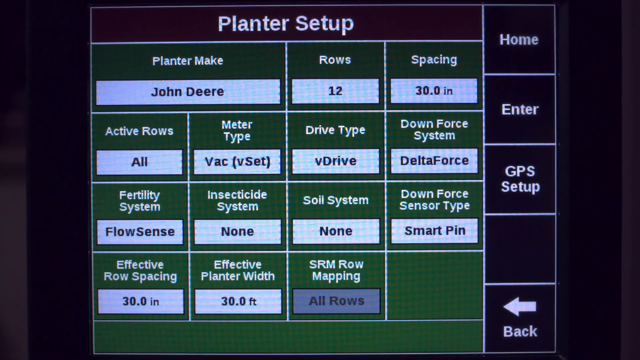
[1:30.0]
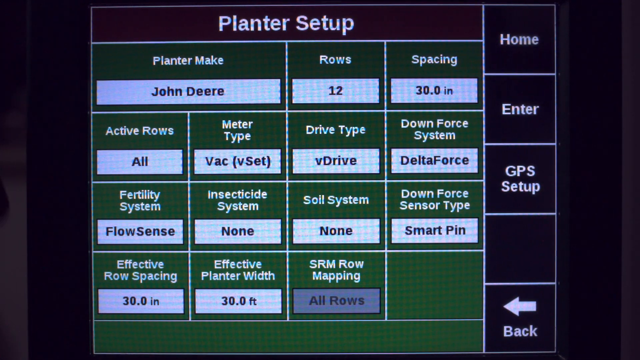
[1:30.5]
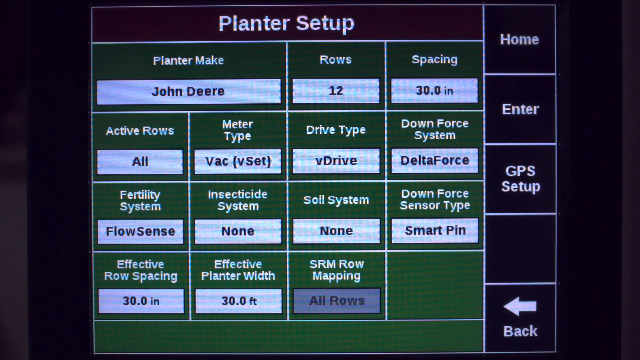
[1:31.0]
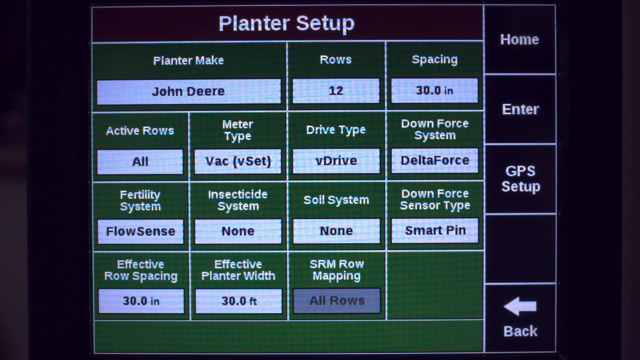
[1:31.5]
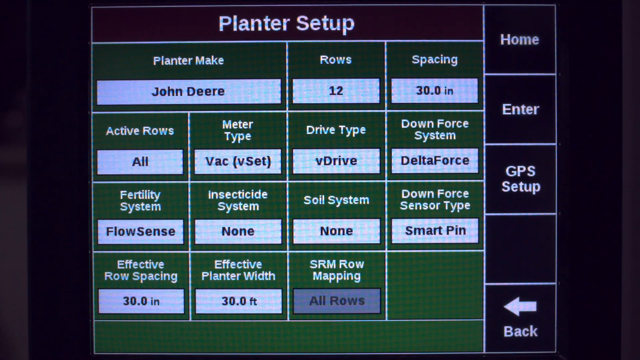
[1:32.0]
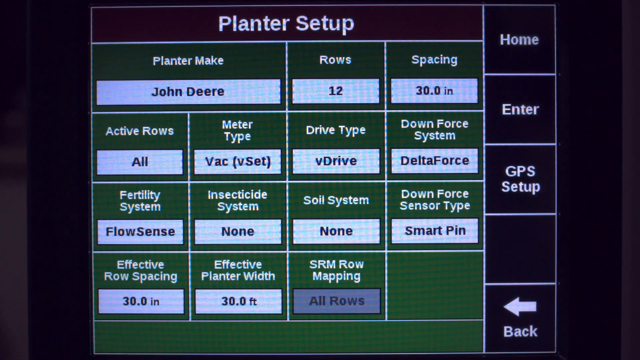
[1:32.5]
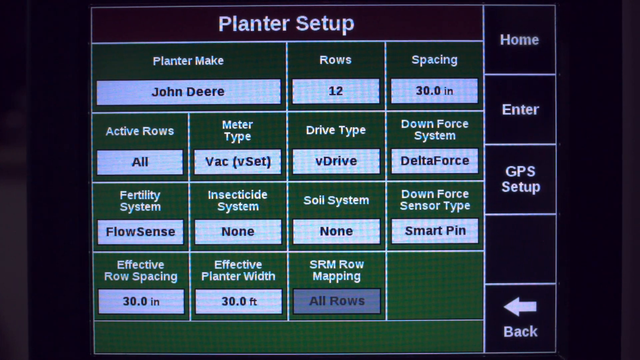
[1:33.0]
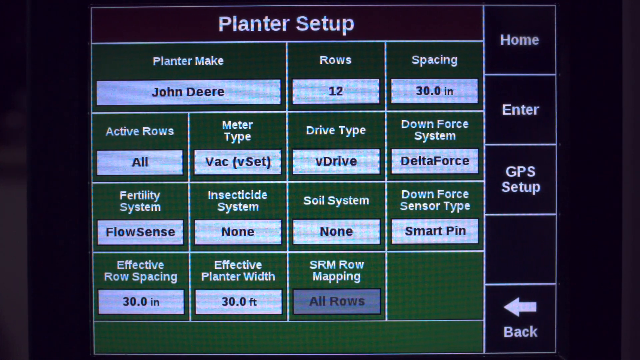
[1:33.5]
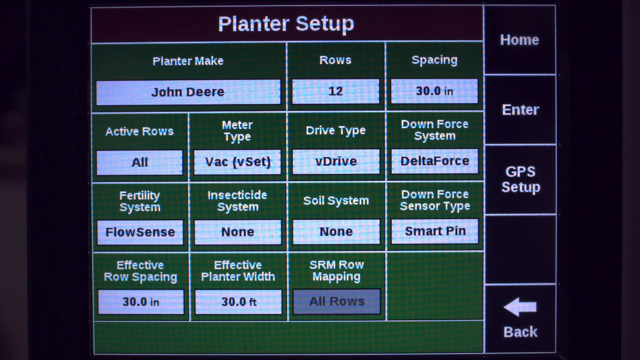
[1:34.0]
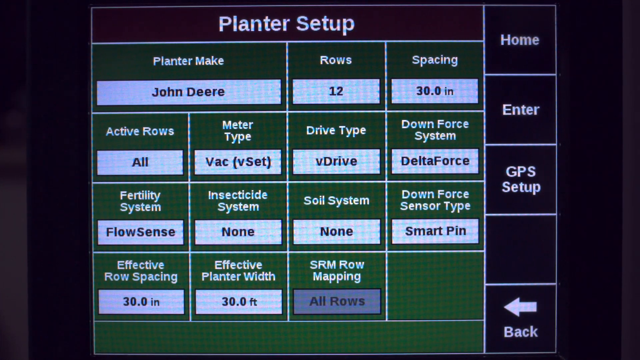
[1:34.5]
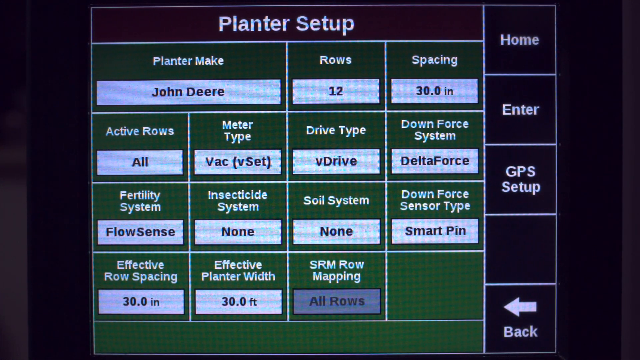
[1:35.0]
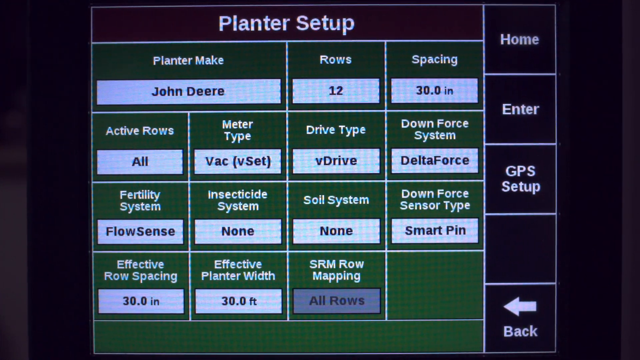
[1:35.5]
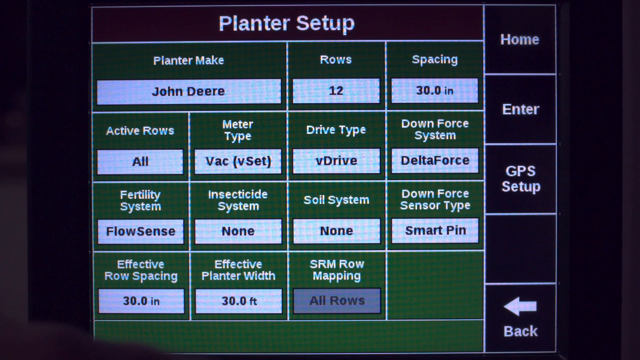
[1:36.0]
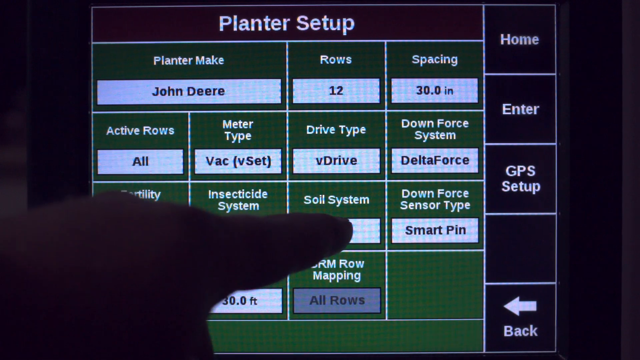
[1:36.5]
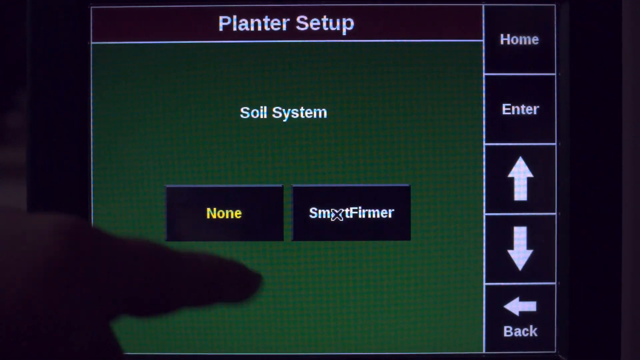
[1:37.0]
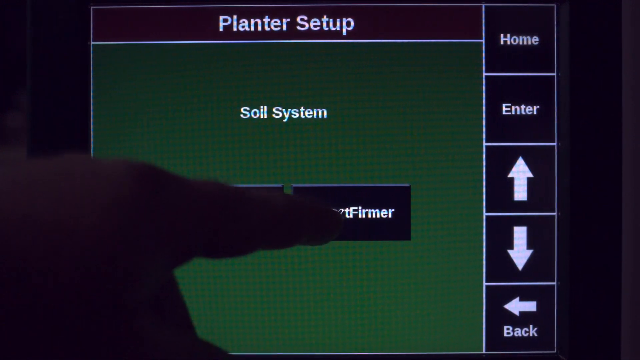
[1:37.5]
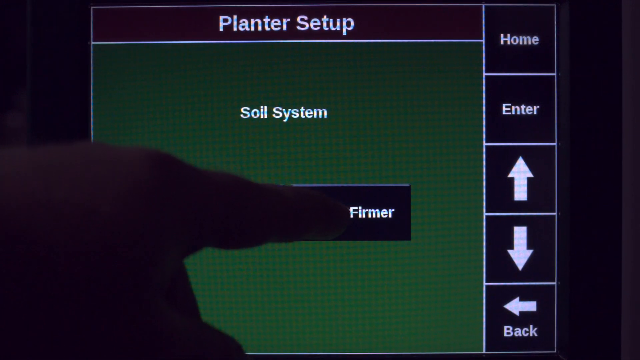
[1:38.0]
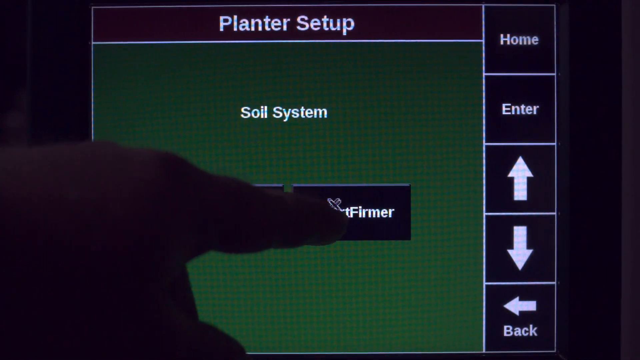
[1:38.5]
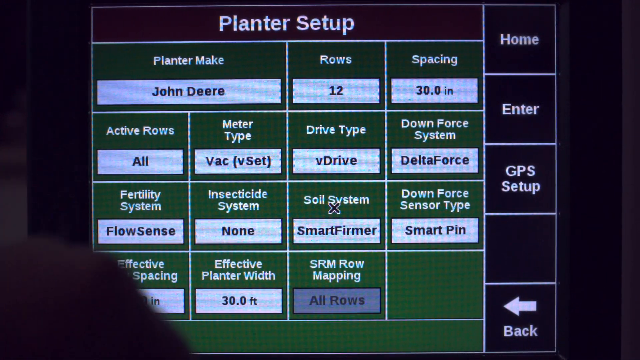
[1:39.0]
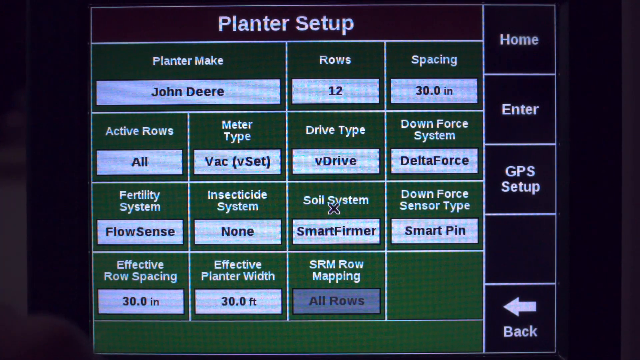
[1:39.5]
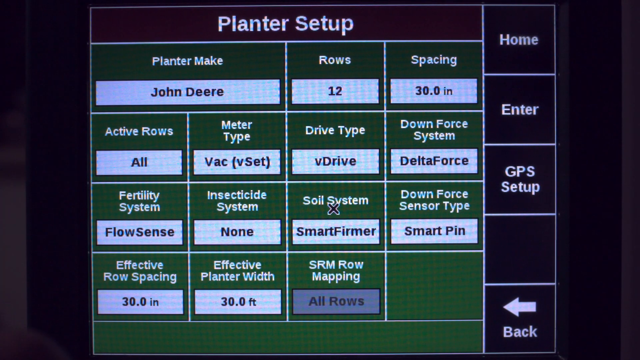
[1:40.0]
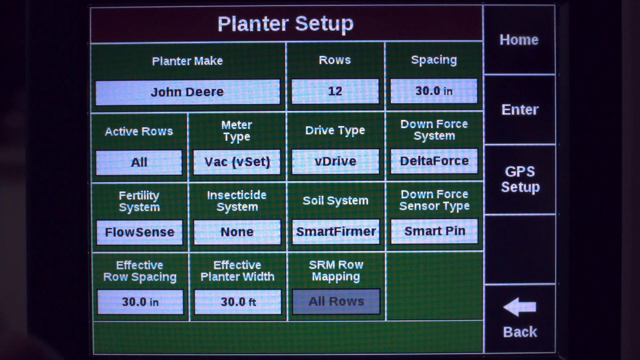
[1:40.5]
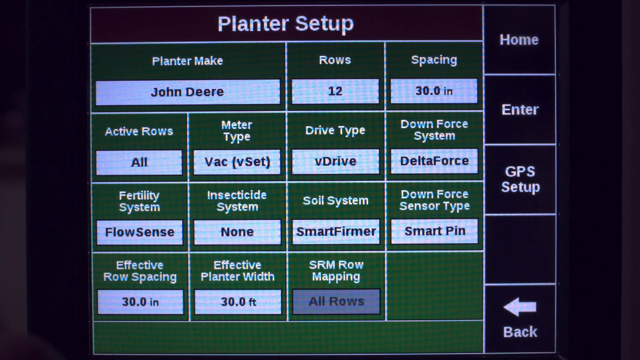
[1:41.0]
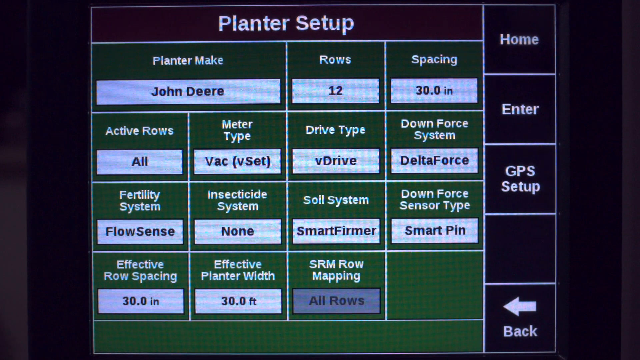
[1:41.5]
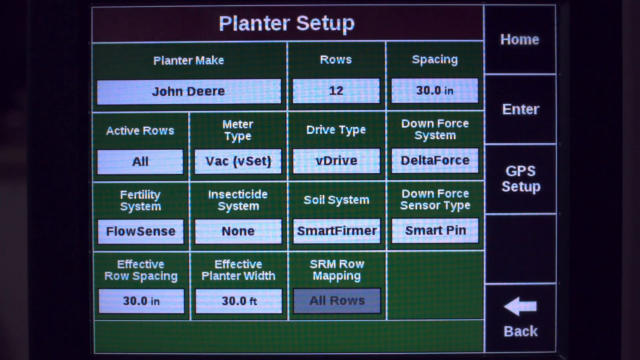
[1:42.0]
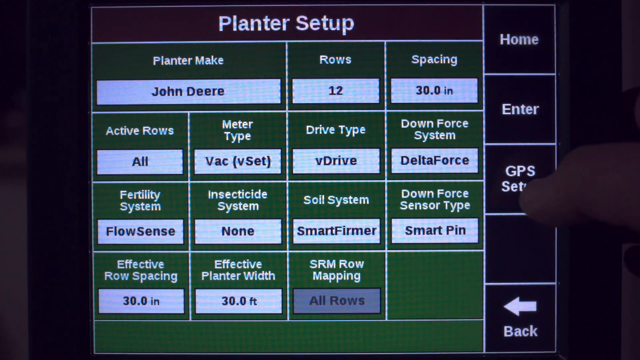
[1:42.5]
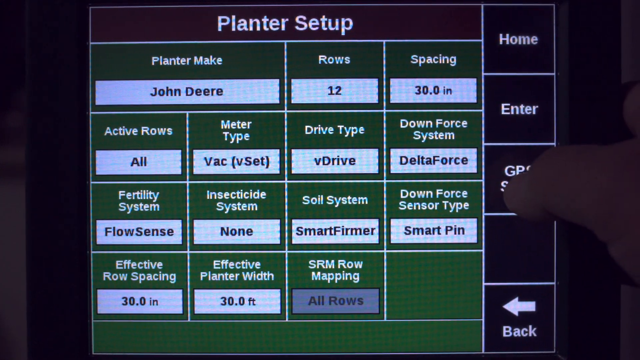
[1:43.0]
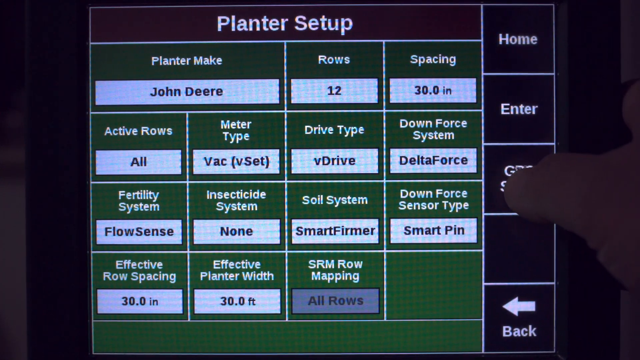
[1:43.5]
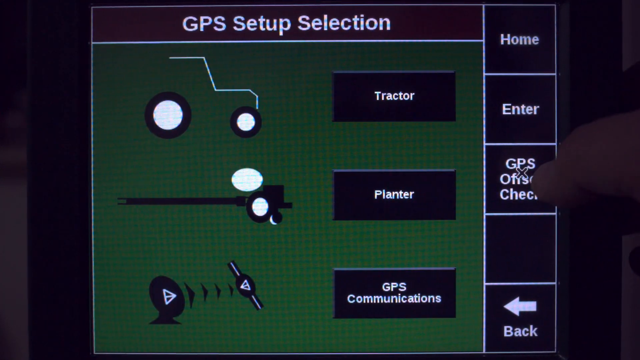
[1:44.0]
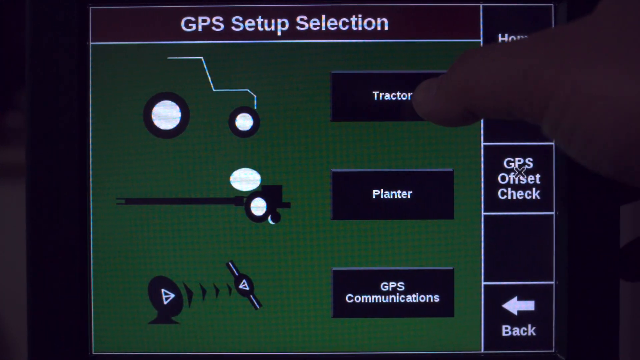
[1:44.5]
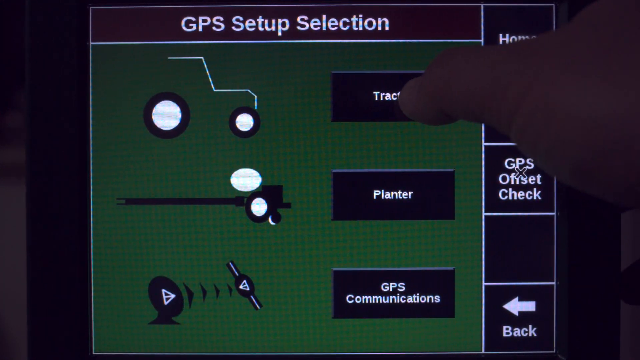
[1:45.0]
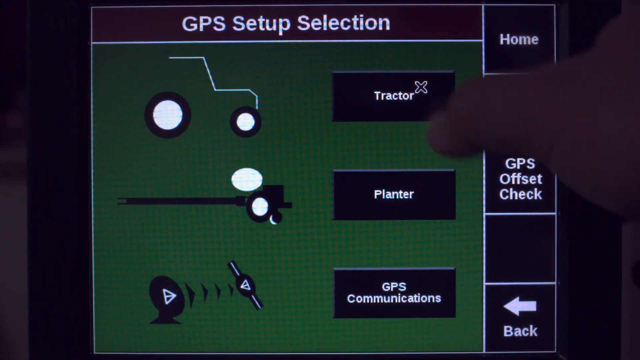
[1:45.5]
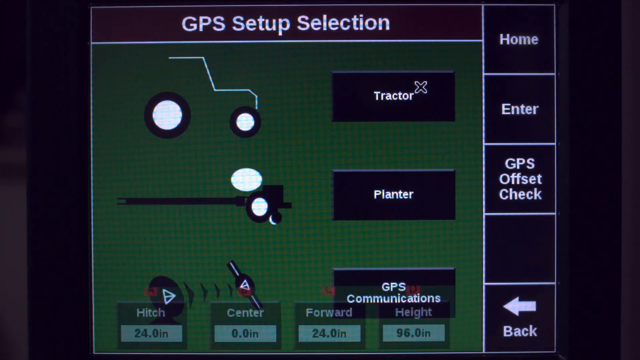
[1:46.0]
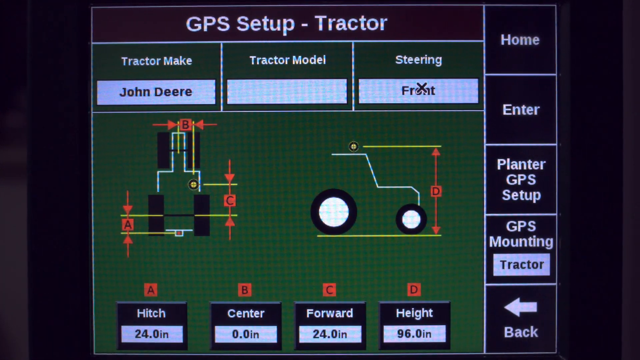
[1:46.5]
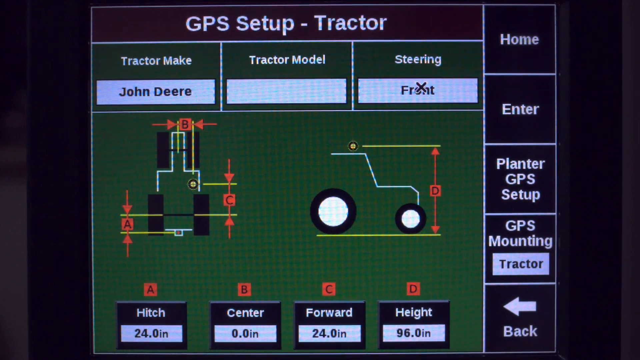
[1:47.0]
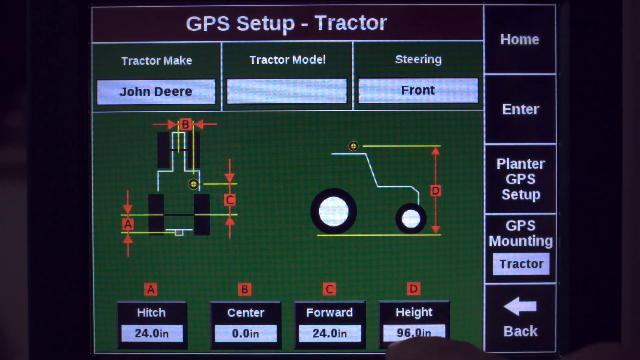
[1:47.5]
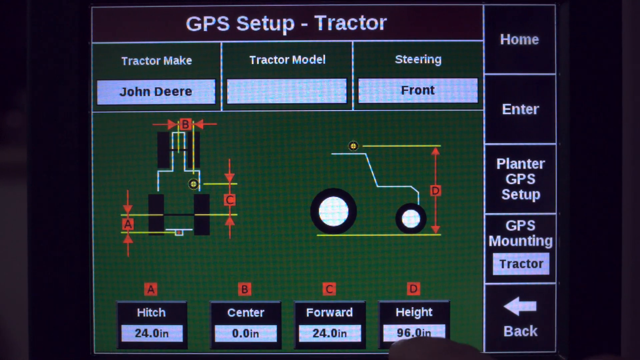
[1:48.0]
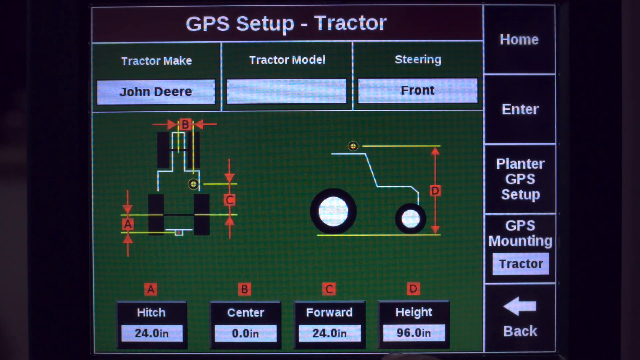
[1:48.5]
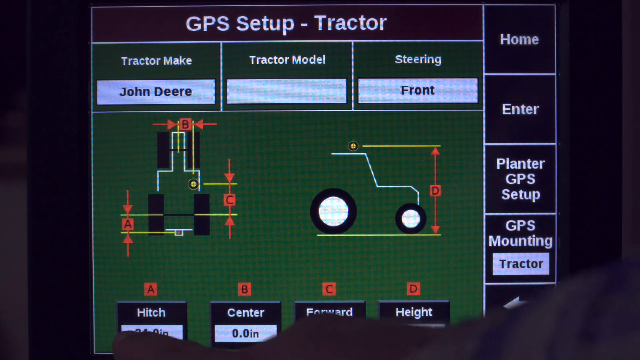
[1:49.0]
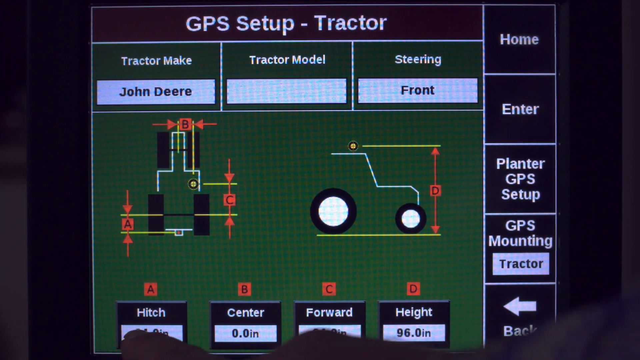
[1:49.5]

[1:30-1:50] A planter setup page is open on a computer screen, and someone clicks buttons in different sections, probably to match the fields they have planted as maybe a farmer or grower. The planter setup has just about four different rows. They click on soil system, then "smart farmer", then GPS, then tractor, and then a GPS setup tractor option. At the bottom of the main page, a row says "effective row spacing" at 30.0 inches, "effective planter width" at 30.4 feet, and "SRM row mapping" set to "all rows". In the upper right corner there are boxes that say "Home" and "Enter".